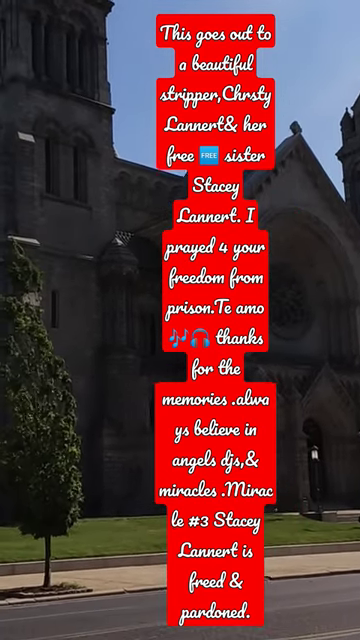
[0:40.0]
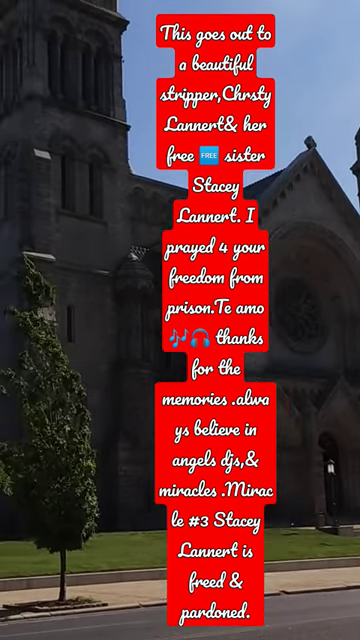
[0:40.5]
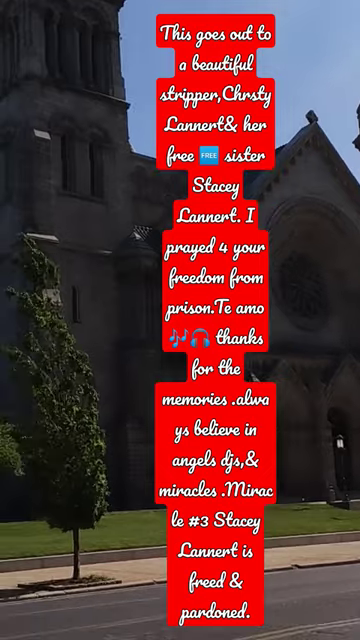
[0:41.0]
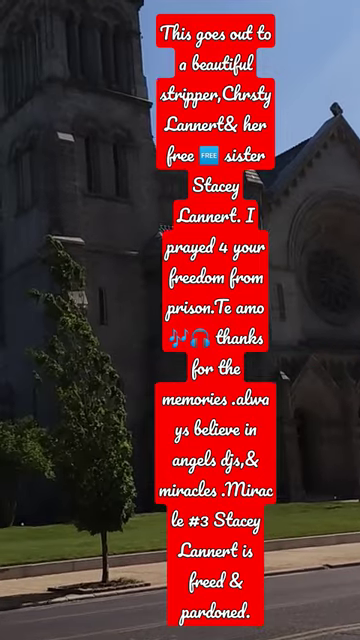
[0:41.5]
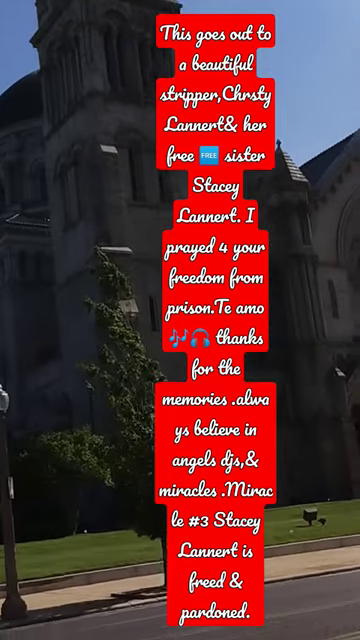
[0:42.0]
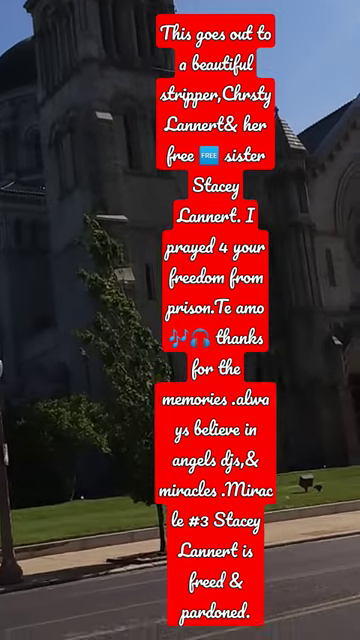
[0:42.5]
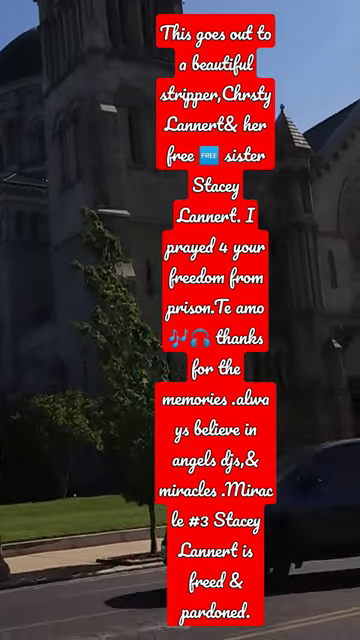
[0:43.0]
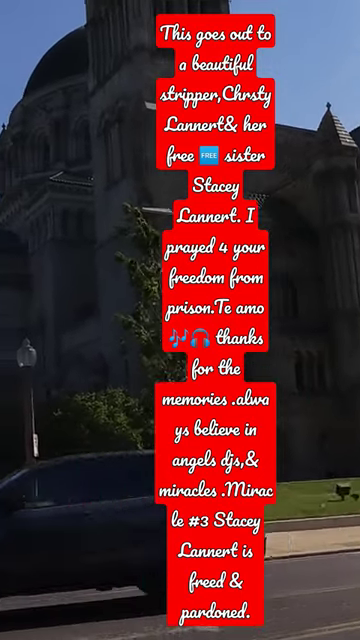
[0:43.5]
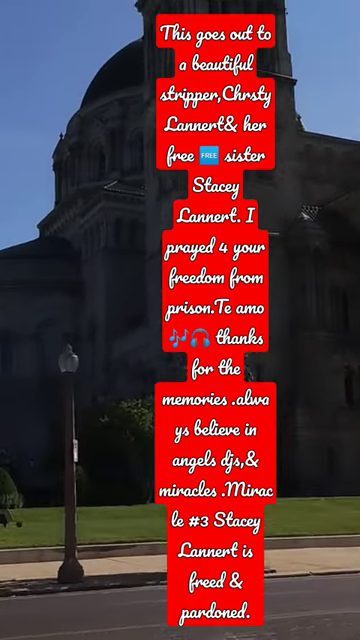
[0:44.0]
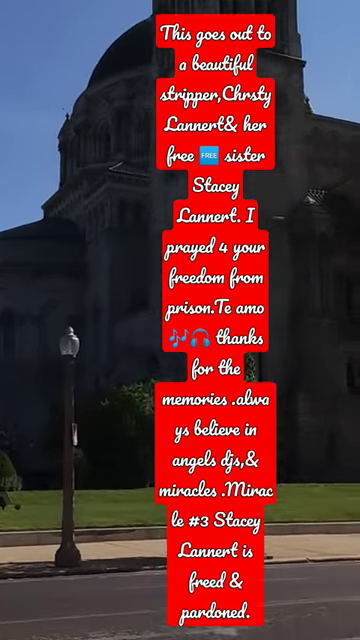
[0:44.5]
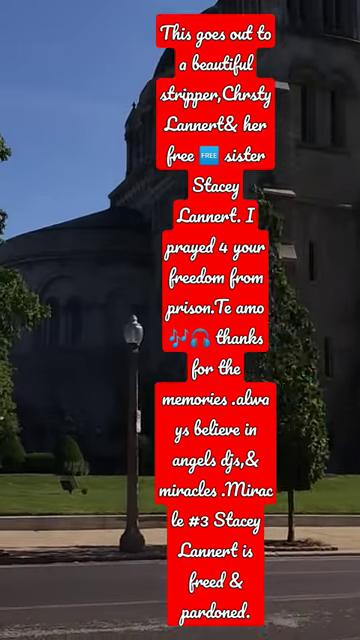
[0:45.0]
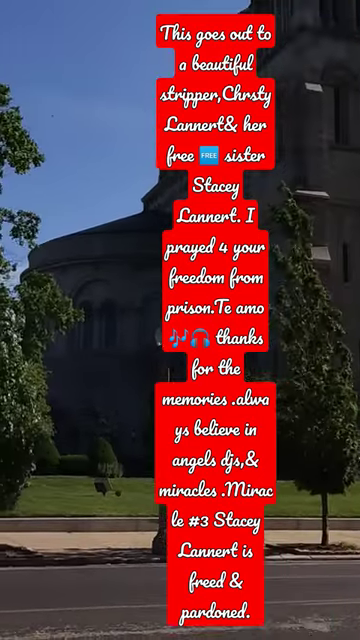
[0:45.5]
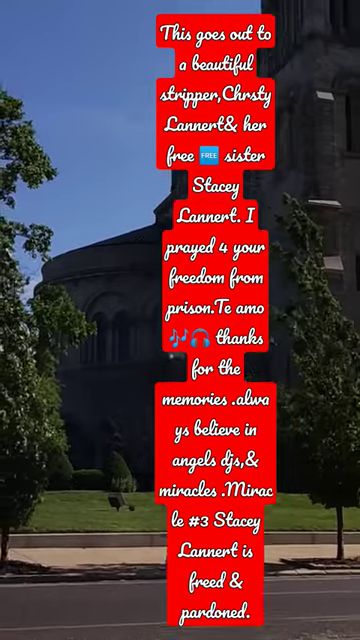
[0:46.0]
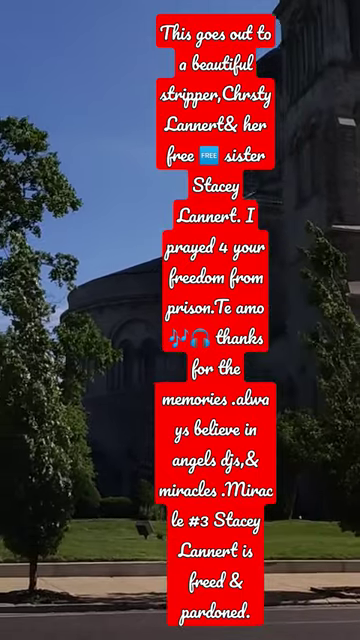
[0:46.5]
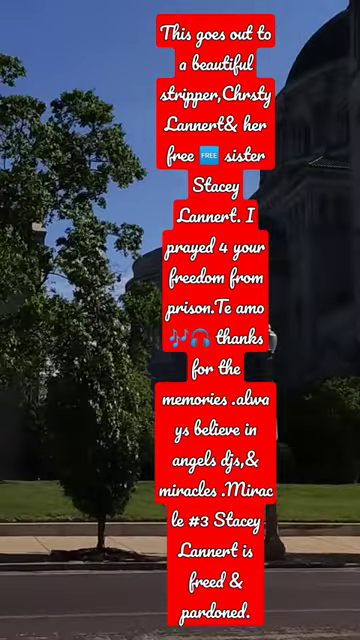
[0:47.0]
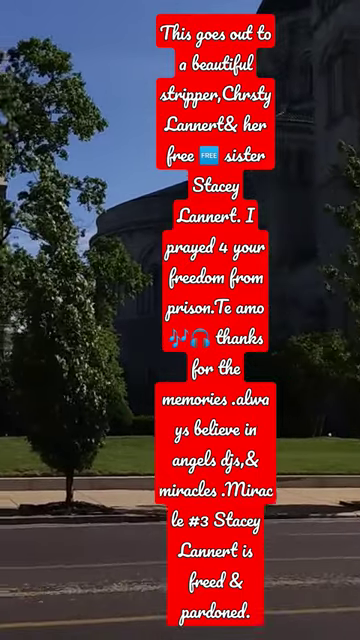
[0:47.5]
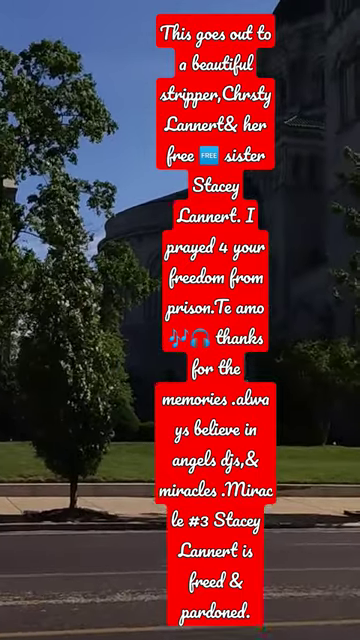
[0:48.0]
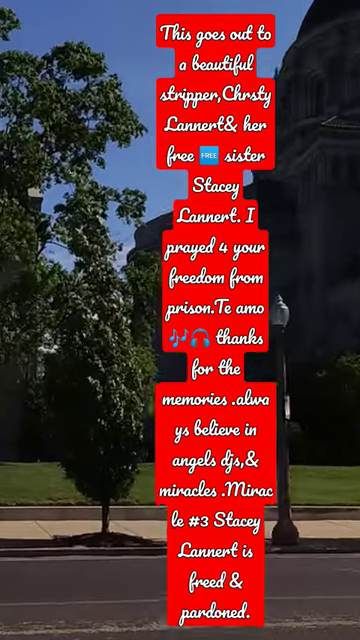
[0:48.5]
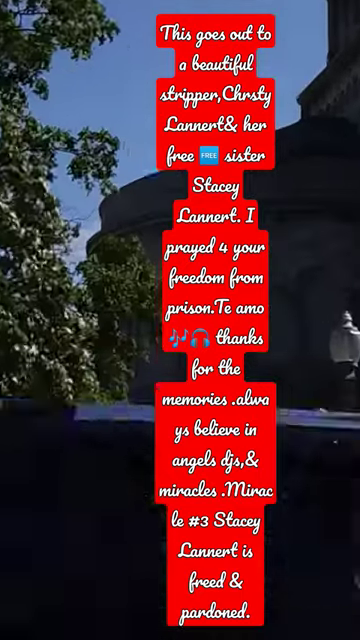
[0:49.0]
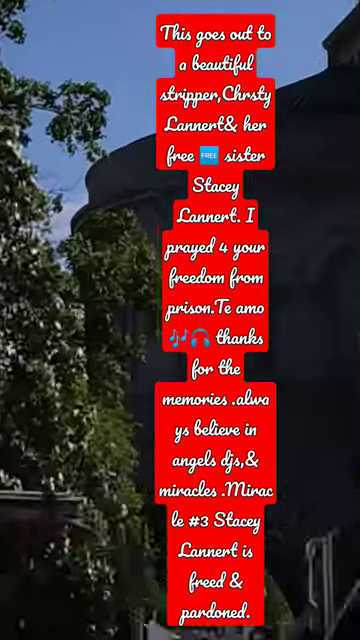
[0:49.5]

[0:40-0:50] Someone holding a phone records the front of an old church that almost appears to be medieval. The church has four to five stories, parapets, a hexagonal roof and a dome. The camera pans left and right periodically, showing the grass in front of the church and the sidewalk, where some trees are planted along with little planters. A car drives by on an asphalt road. Lamps for night lighting are visible, as are lights in the grass apparently meant to illuminate the building at night. It is daytime. Overlaying the image is a message with a red background and white cursive lettering that reads: "This goes out to a beautiful stripper, Christy Lannert and her free sister Stacy Lannert. I prayed for your freedom from prison. Te amo. Thanks for the memories. Always believe in angels, DJs, and miracles. Miracle number three, Stacy Lannert is freed and pardoned."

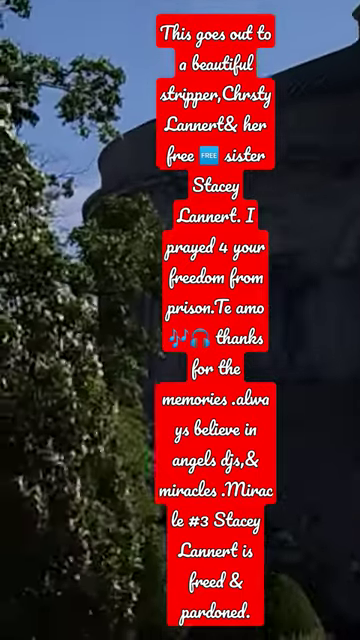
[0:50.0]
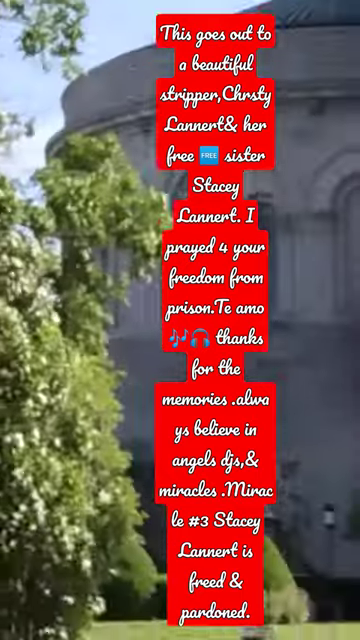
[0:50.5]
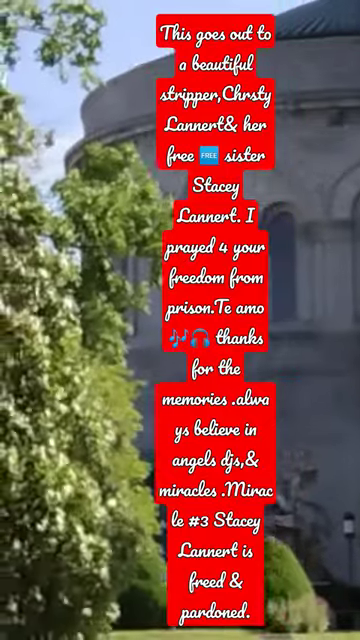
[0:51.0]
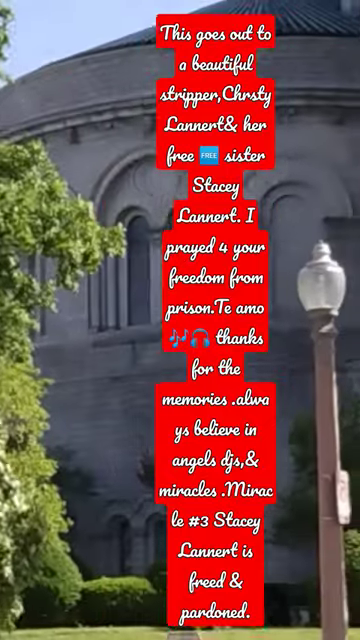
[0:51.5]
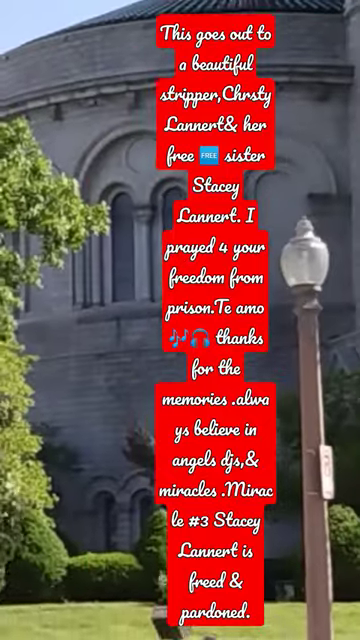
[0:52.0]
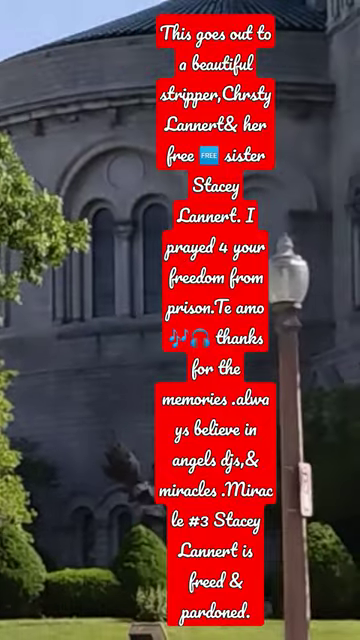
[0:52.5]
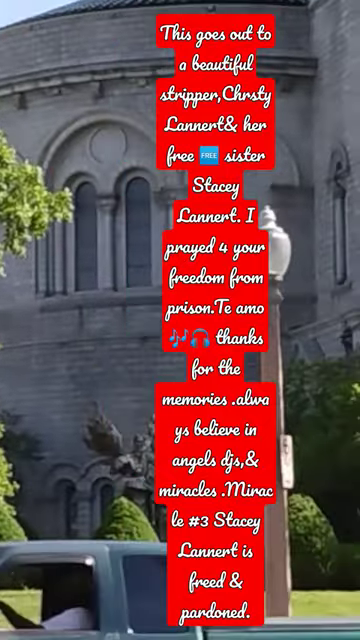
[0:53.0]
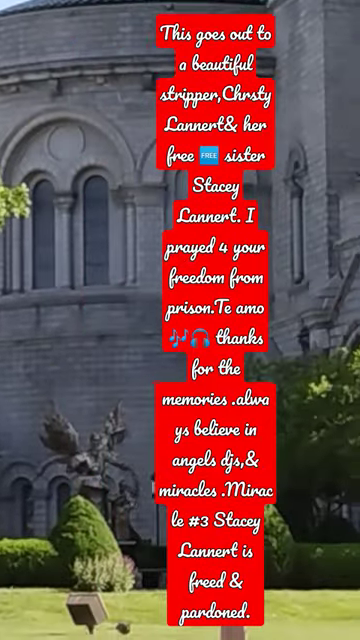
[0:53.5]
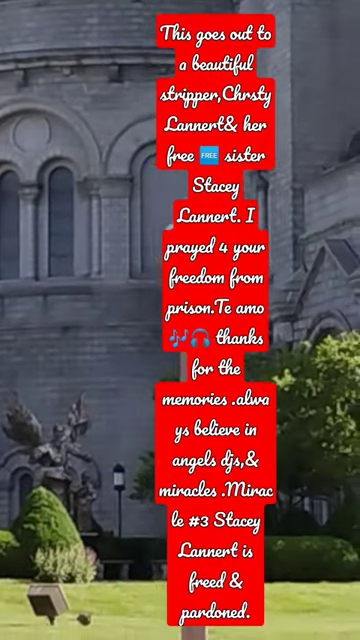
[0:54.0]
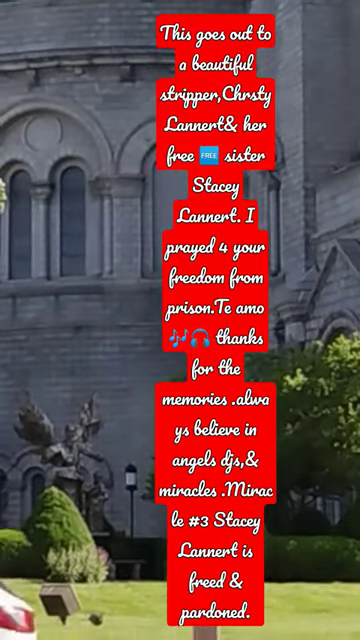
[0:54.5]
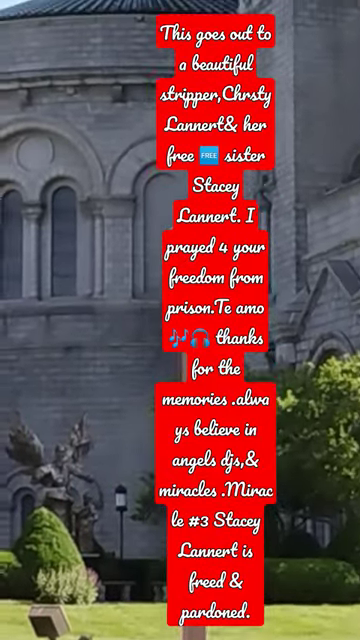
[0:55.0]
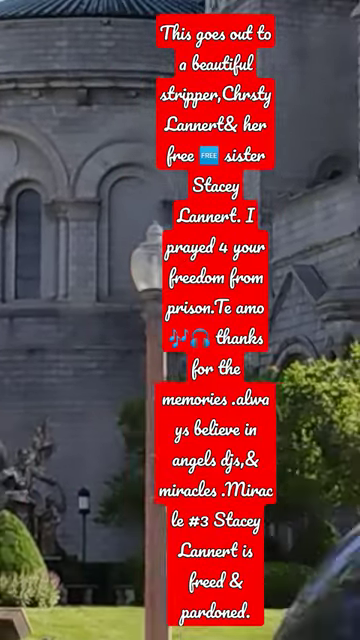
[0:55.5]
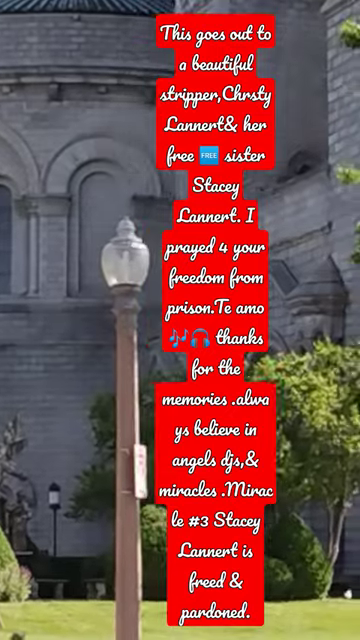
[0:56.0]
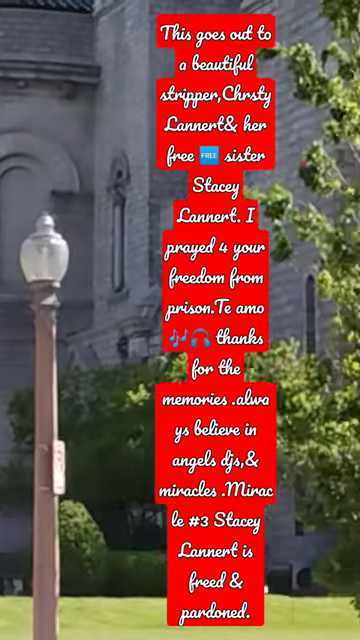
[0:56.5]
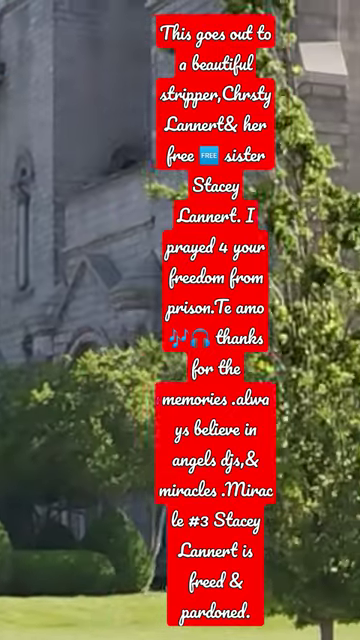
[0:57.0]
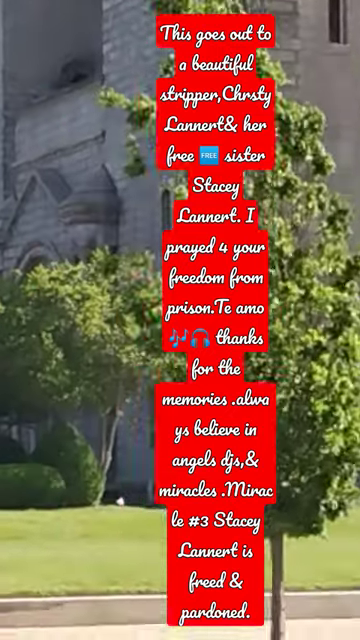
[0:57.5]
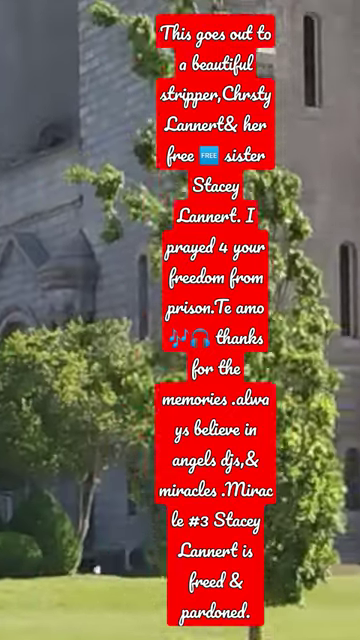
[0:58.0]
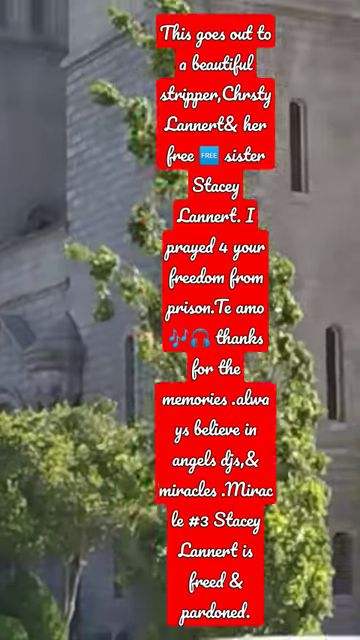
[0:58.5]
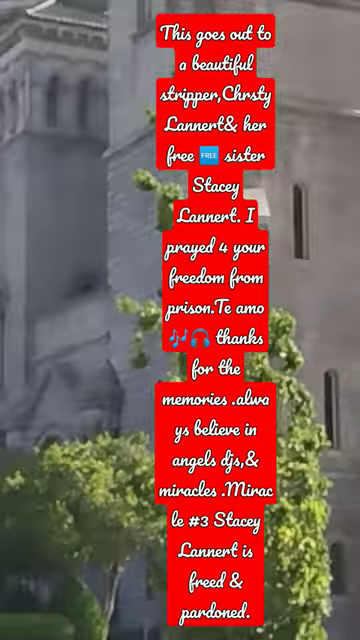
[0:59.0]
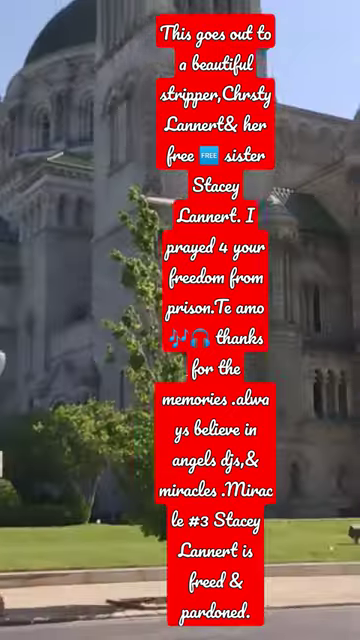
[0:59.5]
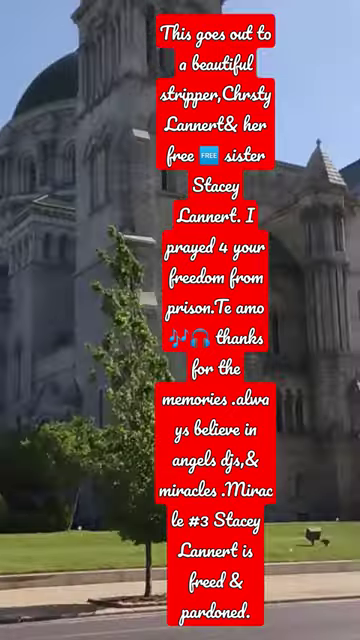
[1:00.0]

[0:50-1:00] The video is taken with a handheld phone, so it is quite shaky. The camera zooms in and out on a church that is four to five stories tall with concrete and block walls. It has a hexagonal parapet roof on top of one tower and a hemispherical dome at the top. As the camera zooms, trees planted nearby in the front are visible, along with the grass, the sidewalk and the blue sky in the background. A message overlays the video with a red background and white cursive lettering that reads: "This goes out to a beautiful stripper, Christy Lannert, and her free sister, Stacey Lannert. I prayed for your freedom from prison. Te amo. Thanks for the memories. Always believe in angels, DJs, and miracles. Miracle number three, Stacey Lannert is freed and pardoned."